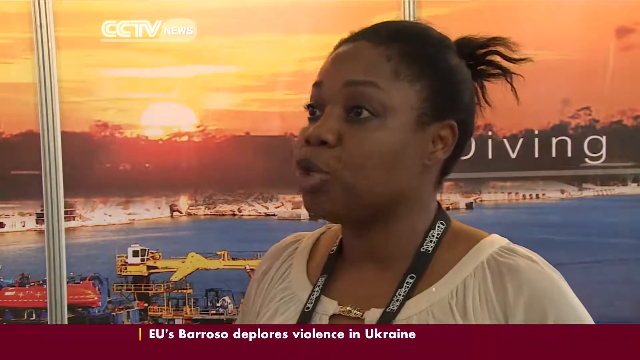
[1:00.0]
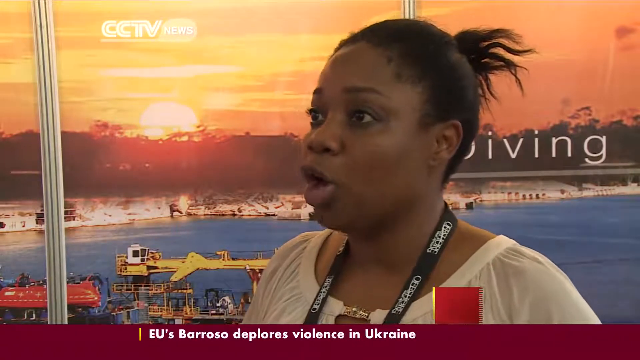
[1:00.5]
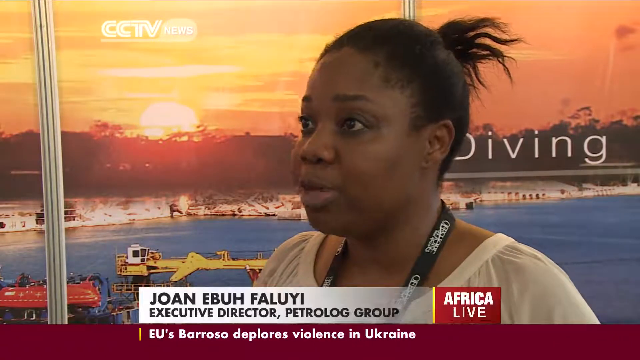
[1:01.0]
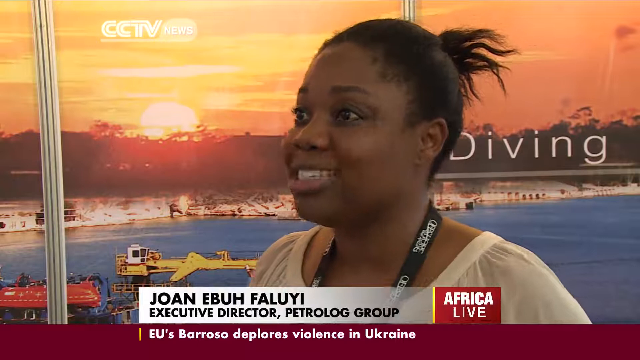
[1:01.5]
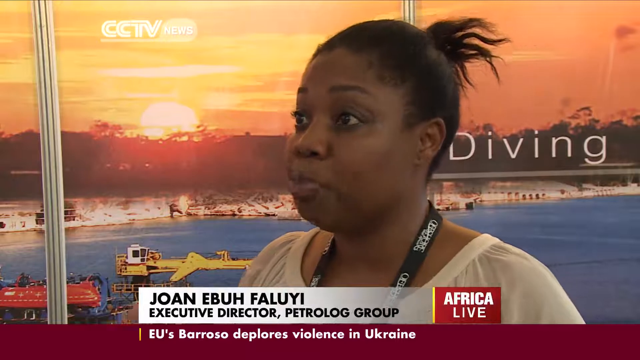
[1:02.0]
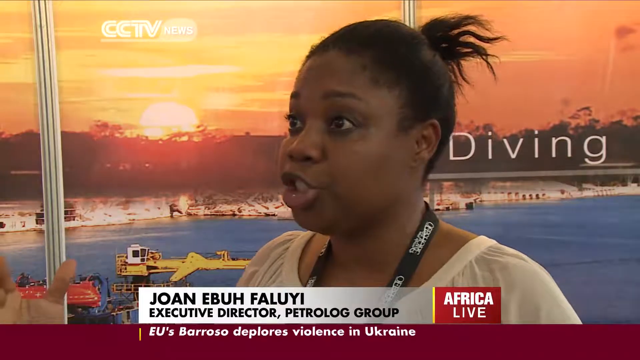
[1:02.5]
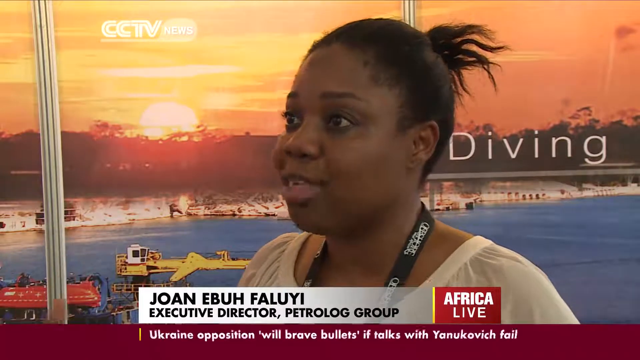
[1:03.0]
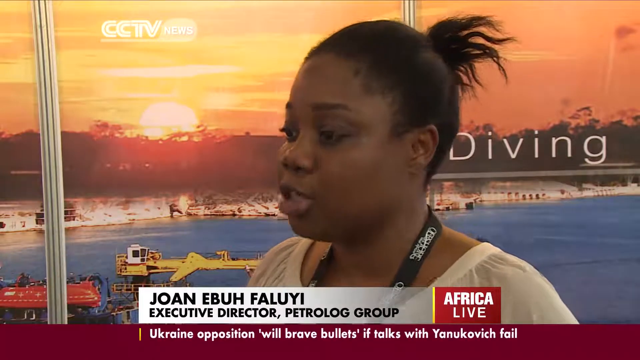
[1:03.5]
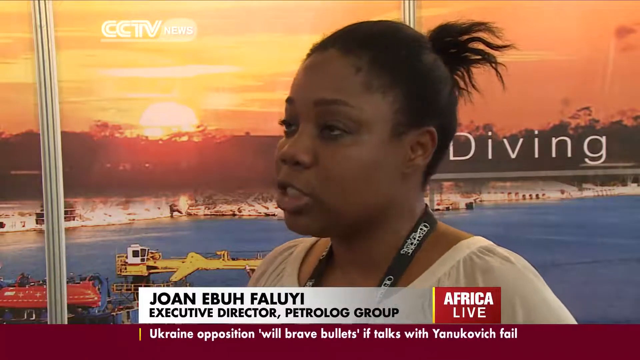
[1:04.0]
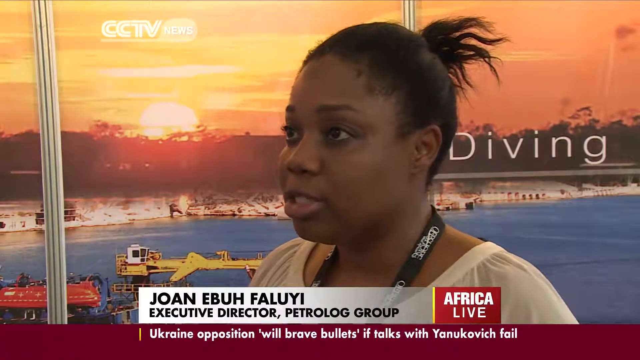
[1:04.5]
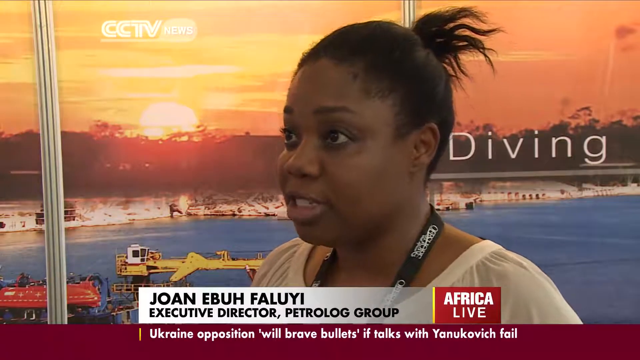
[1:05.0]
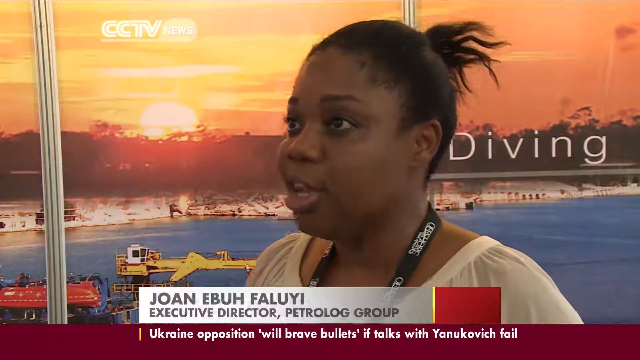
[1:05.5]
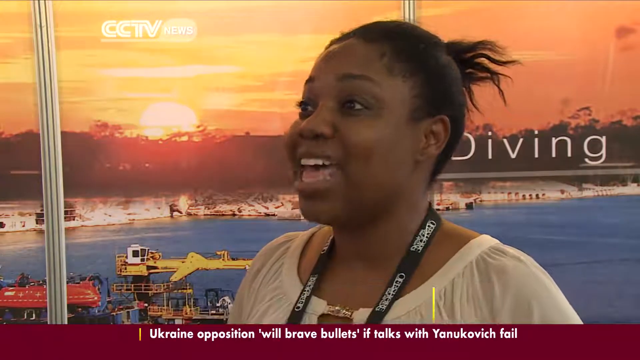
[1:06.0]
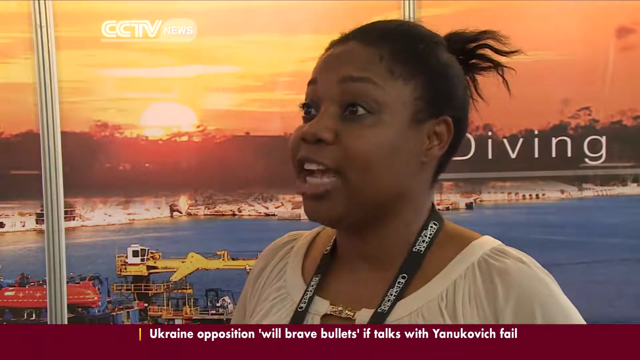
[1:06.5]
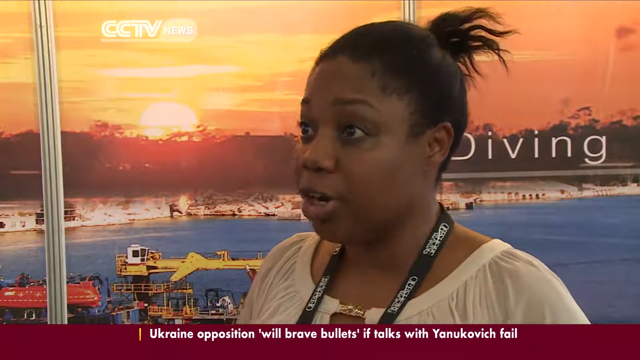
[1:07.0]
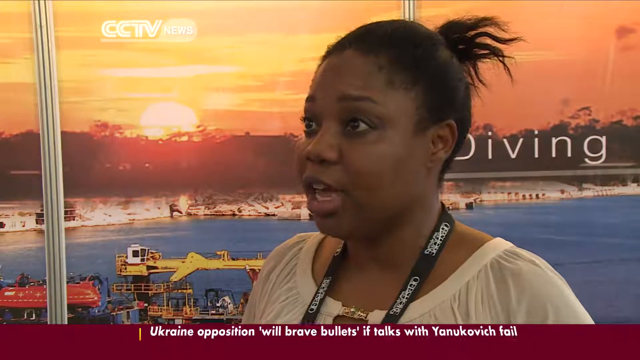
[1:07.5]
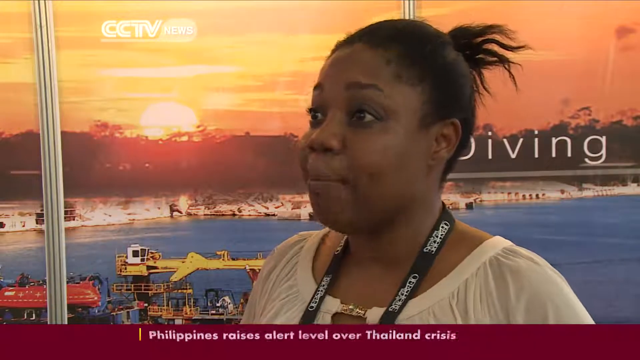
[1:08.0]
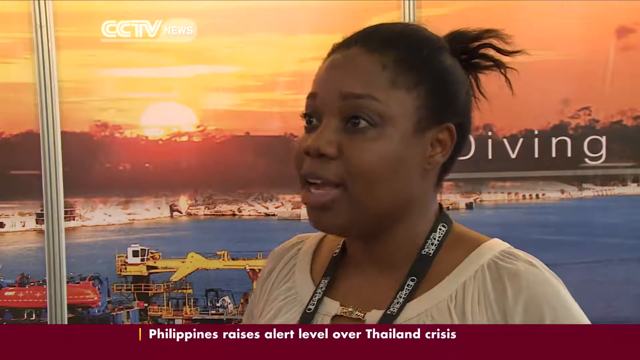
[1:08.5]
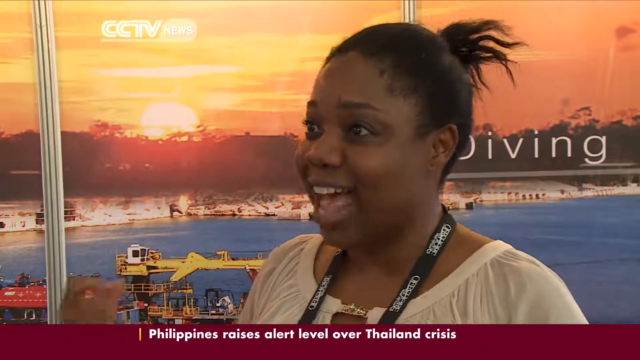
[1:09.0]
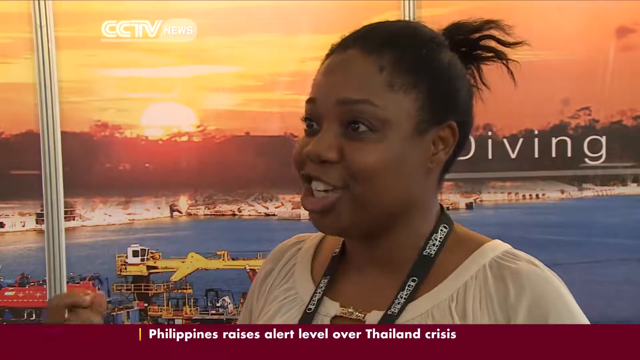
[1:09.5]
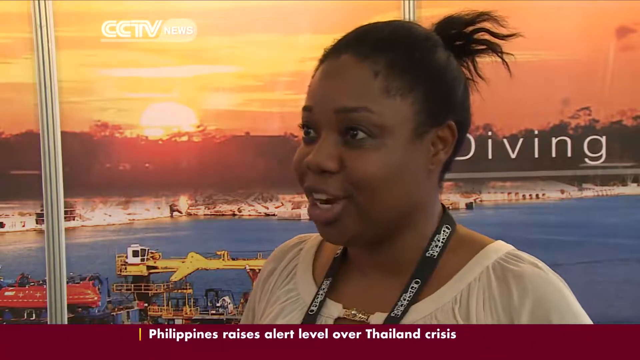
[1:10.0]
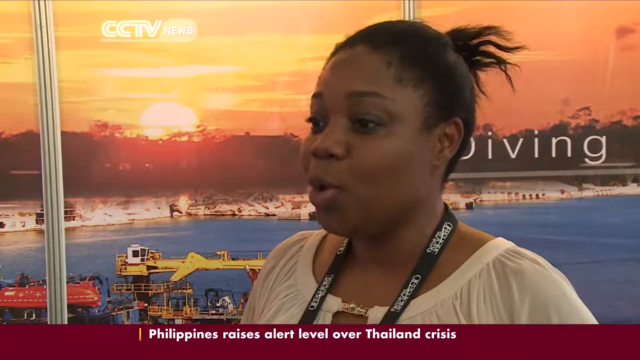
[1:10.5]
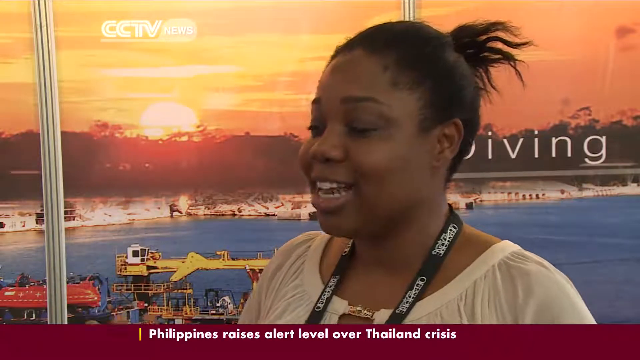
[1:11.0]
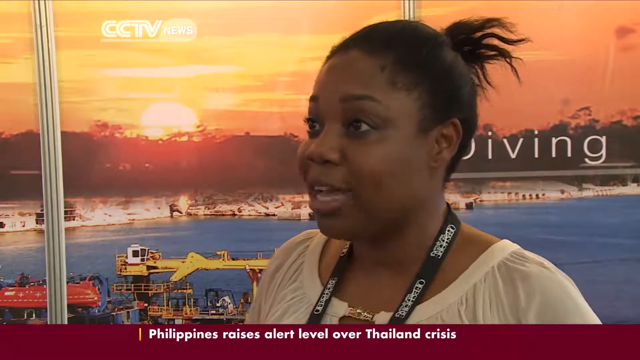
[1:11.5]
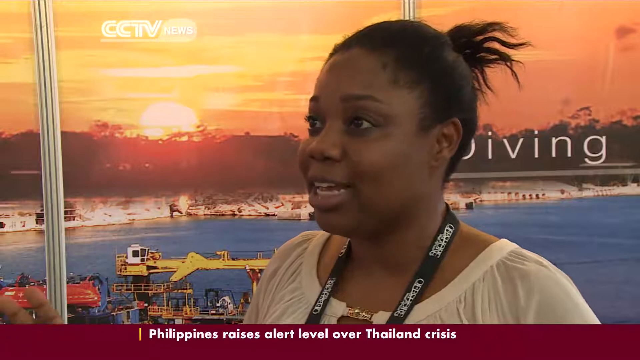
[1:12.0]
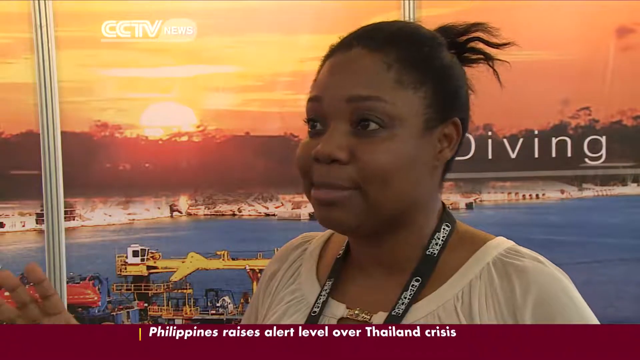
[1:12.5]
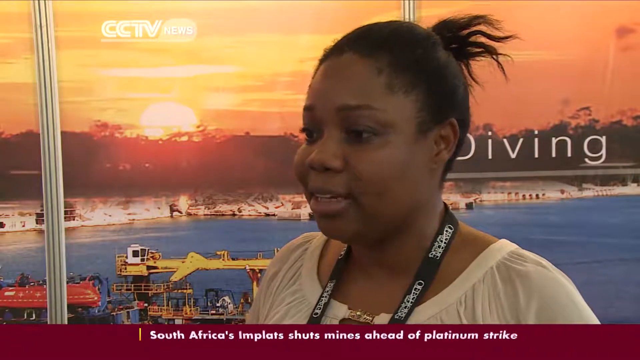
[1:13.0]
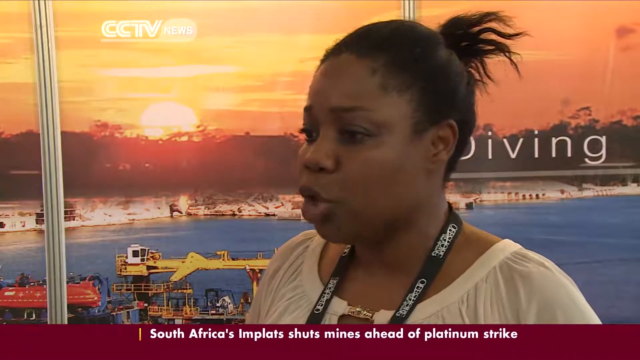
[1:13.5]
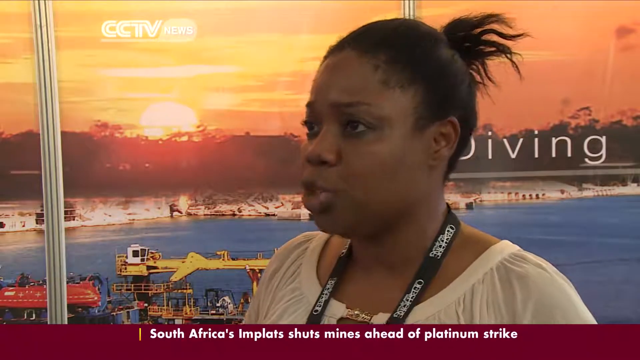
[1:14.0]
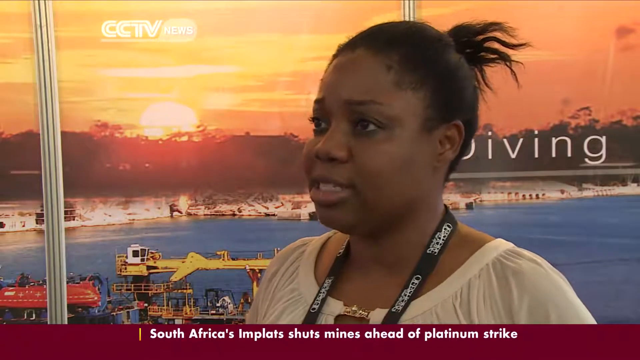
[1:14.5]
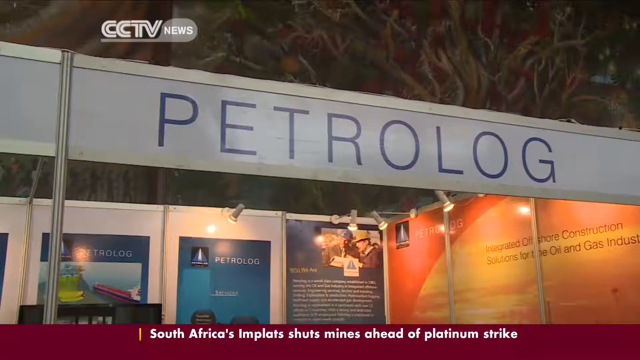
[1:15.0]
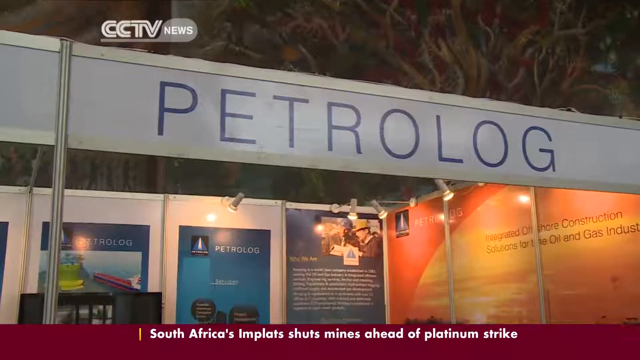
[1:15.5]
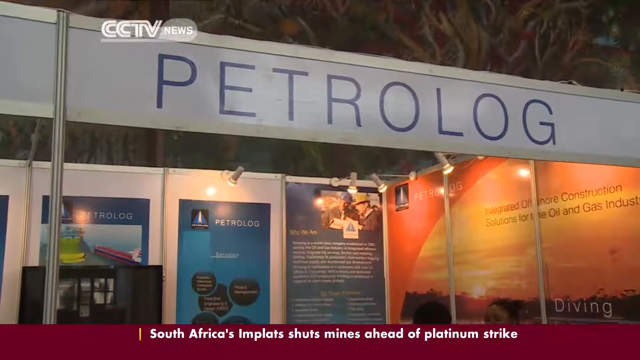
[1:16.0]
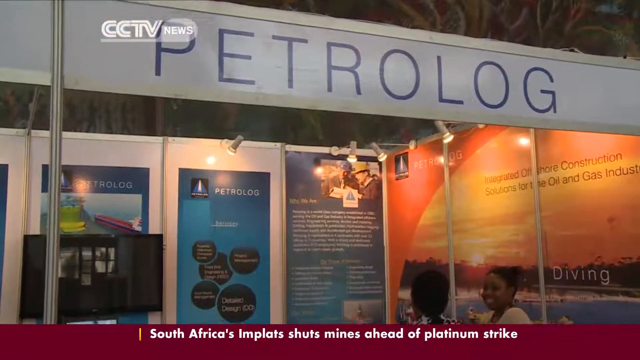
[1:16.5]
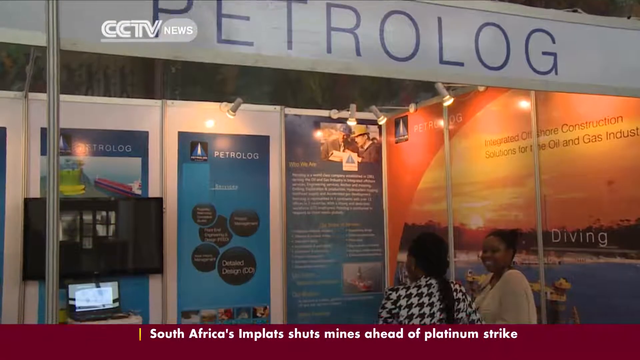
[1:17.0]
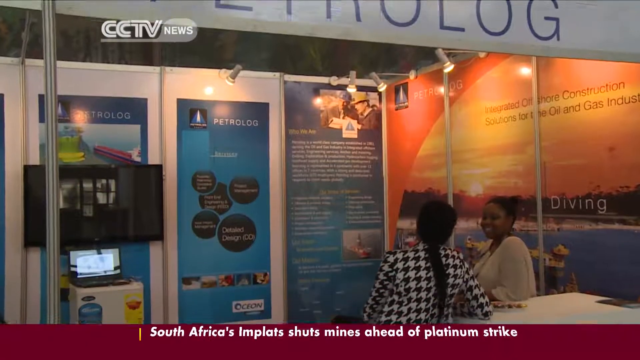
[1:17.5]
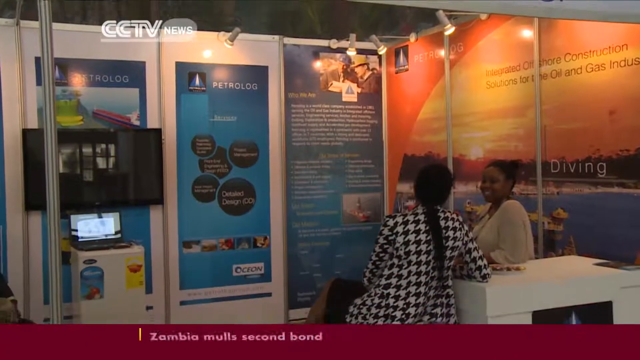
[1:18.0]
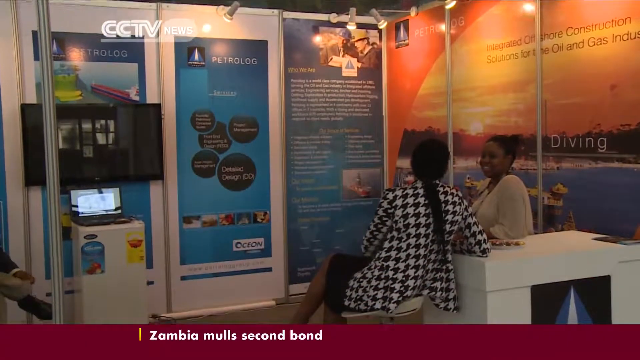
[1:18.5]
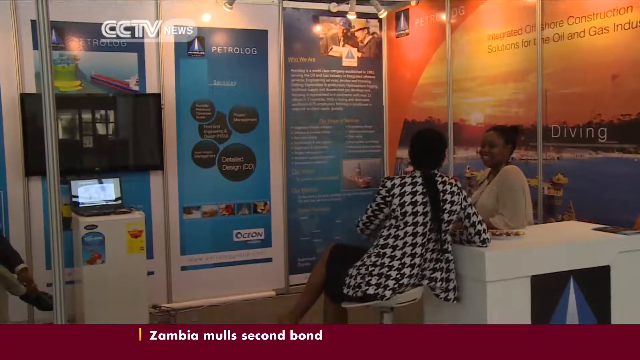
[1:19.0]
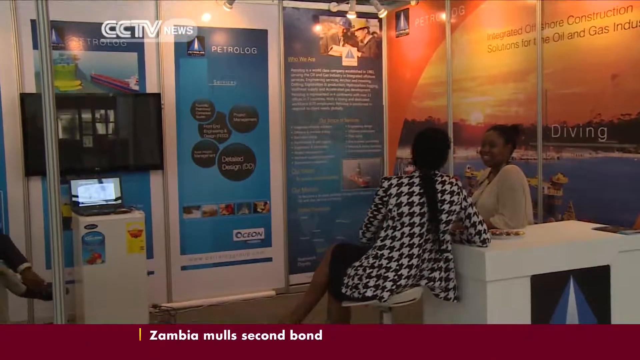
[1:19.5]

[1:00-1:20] The news channel name "CCTV News" is visible in the top left corner, written in grey with a white outline. Another name, which appears to be on a building, reads "Welcome to offshore west," also written in white. At the bottom, the name of the story reads "18th annual West Africa offshore oil conference," and to the right is the name "Africa Live." People work in cubicles that seem to be situated in a type of mall. There are some women, one wearing a blue dress and one wearing a red dress, and they look very work-professional. A middle-aged man talks to two other colleagues, and they wear cards around their necks. A man in a white shirt appears to be doing an experiment.